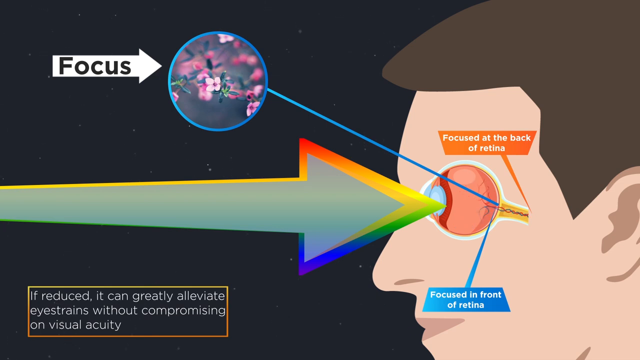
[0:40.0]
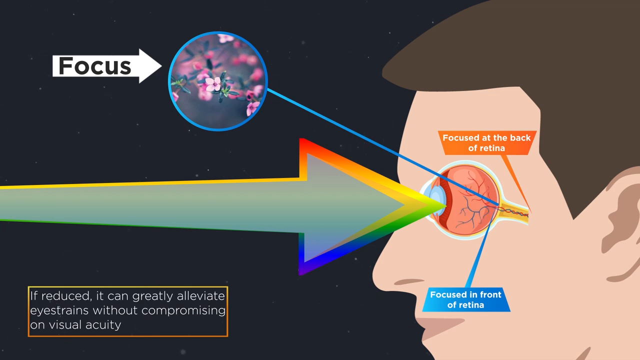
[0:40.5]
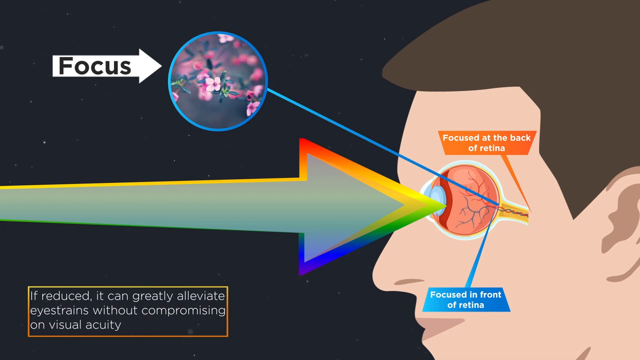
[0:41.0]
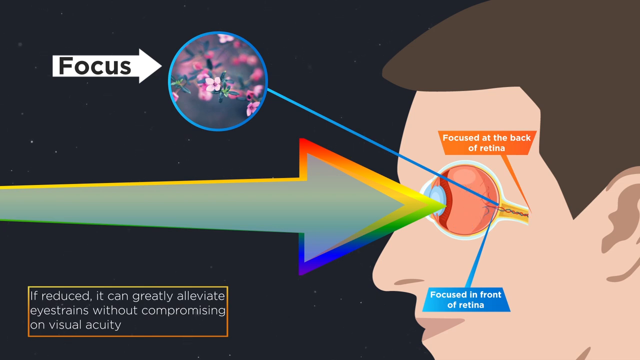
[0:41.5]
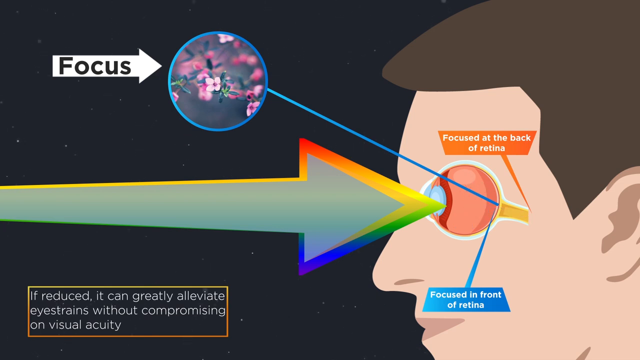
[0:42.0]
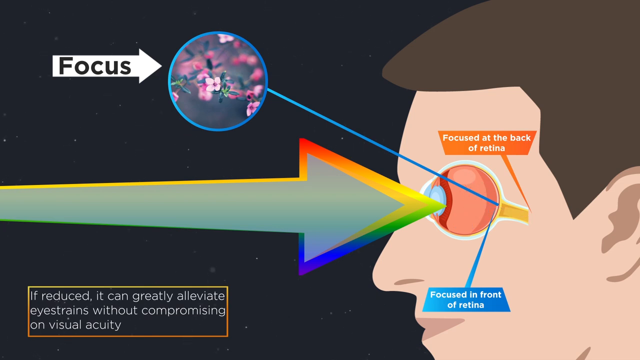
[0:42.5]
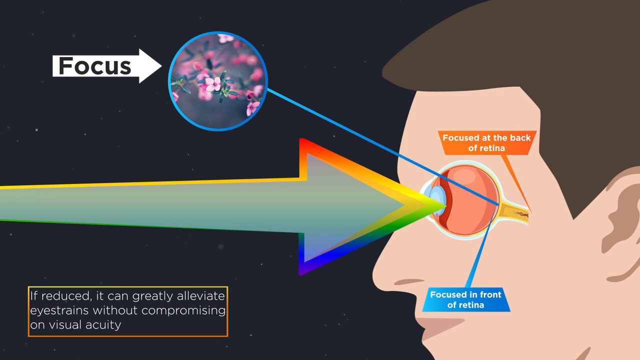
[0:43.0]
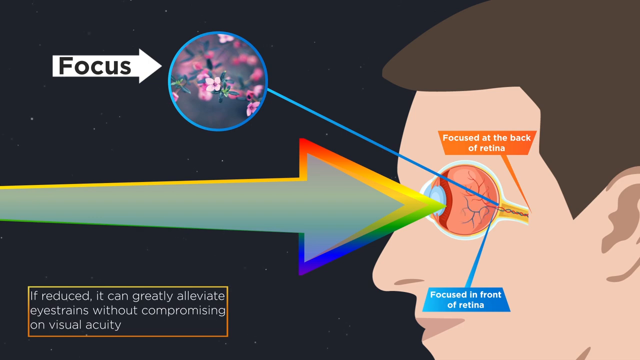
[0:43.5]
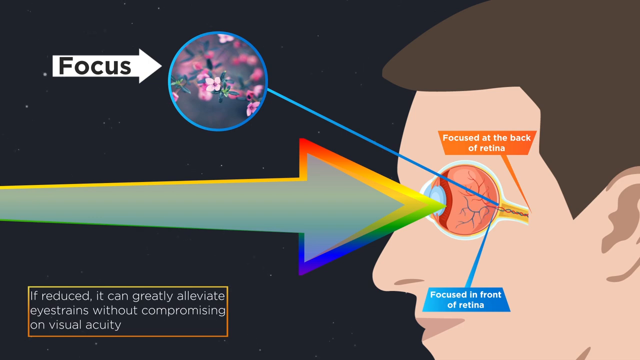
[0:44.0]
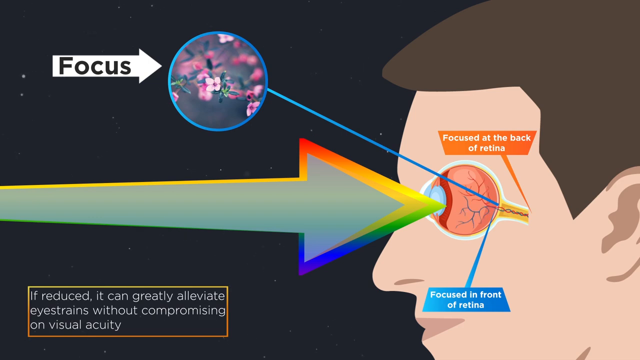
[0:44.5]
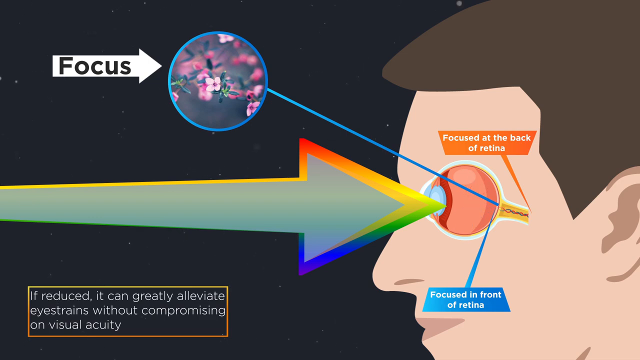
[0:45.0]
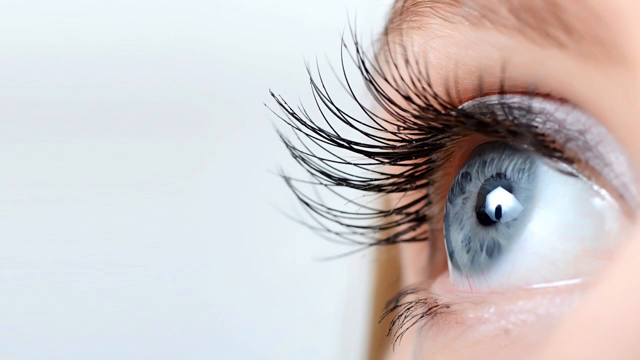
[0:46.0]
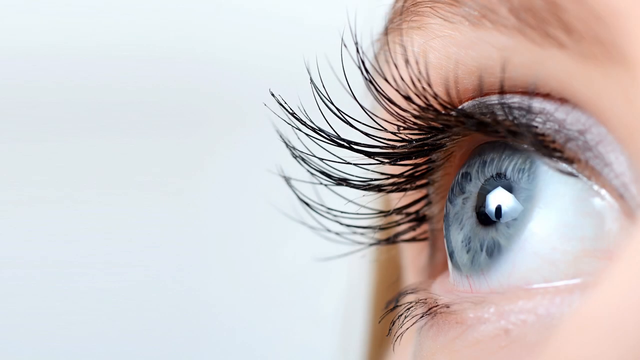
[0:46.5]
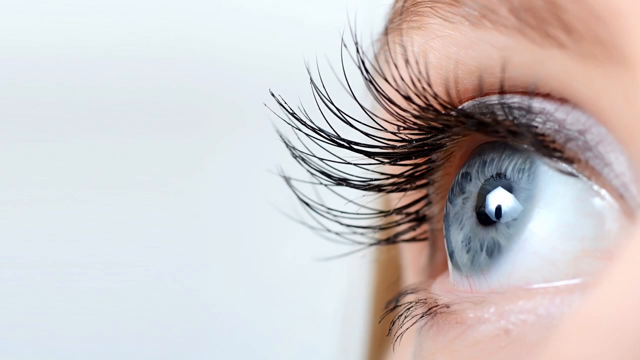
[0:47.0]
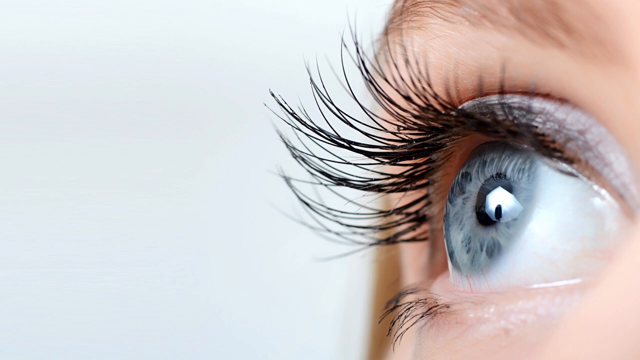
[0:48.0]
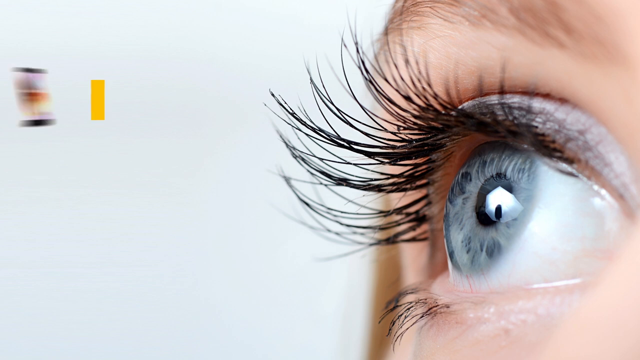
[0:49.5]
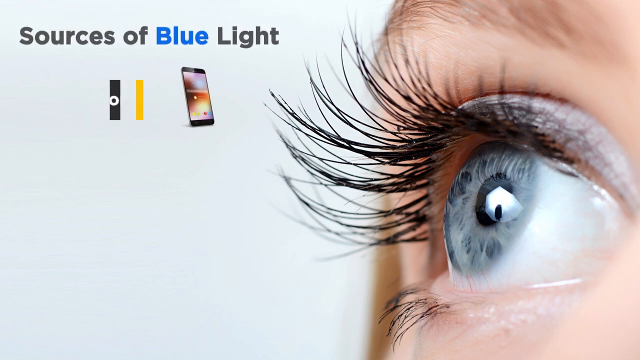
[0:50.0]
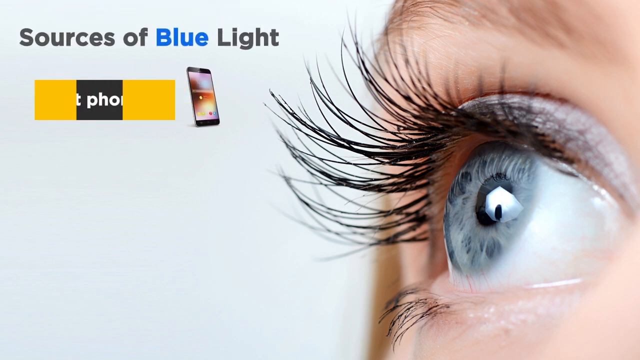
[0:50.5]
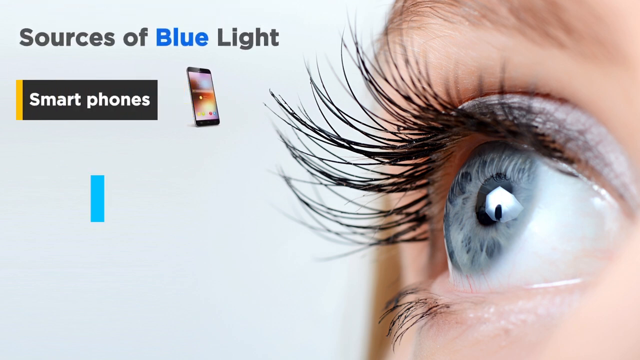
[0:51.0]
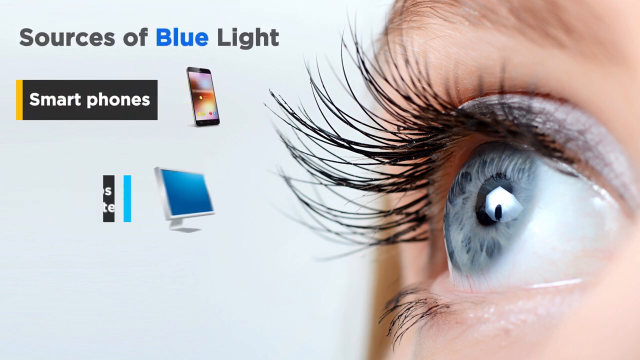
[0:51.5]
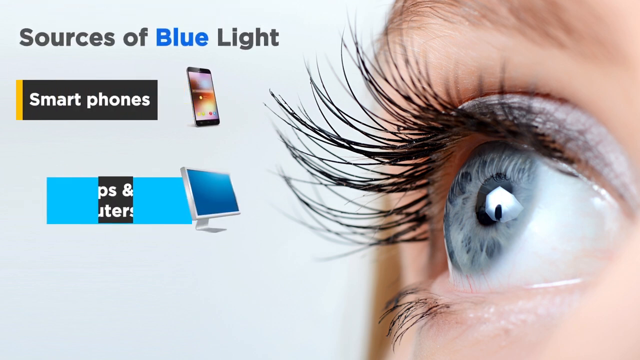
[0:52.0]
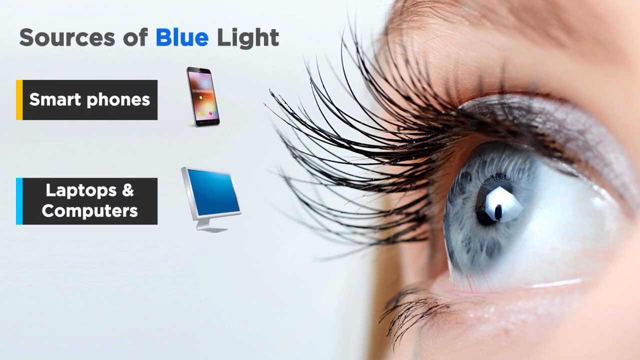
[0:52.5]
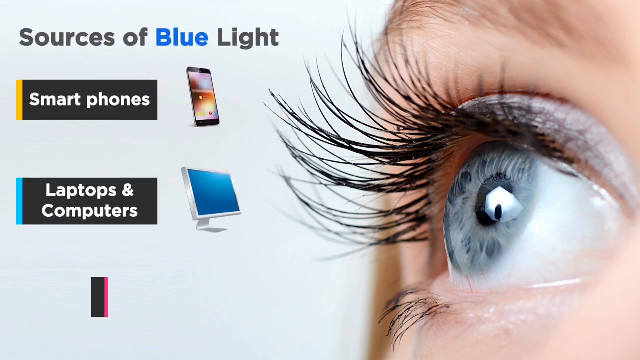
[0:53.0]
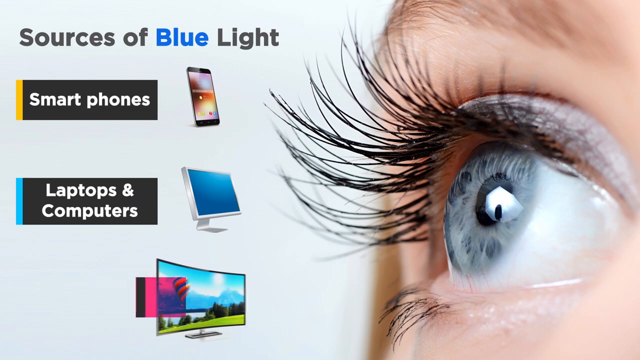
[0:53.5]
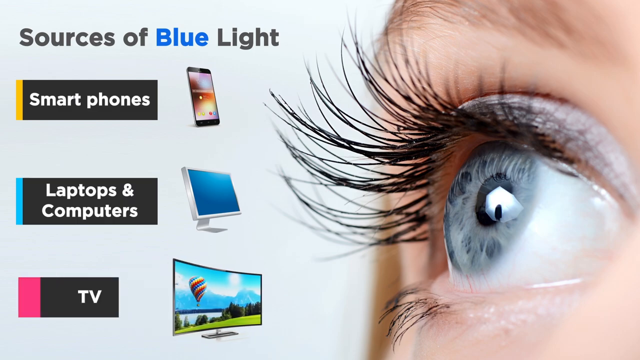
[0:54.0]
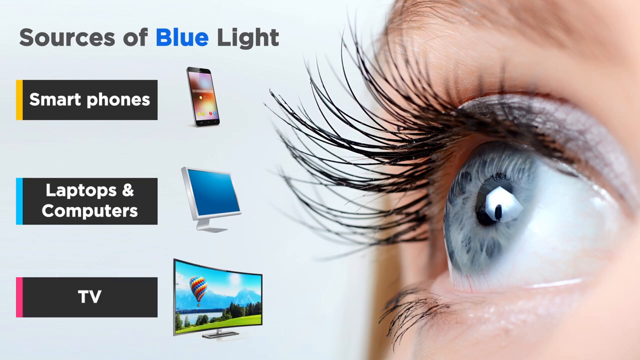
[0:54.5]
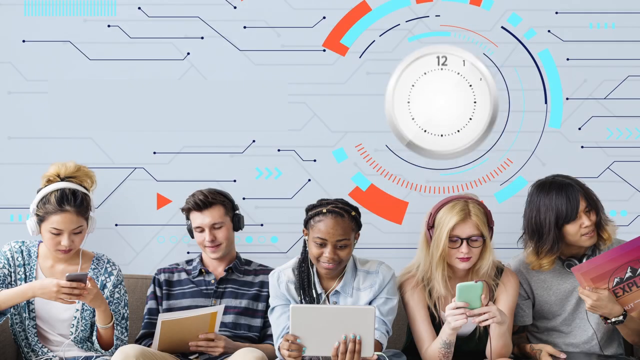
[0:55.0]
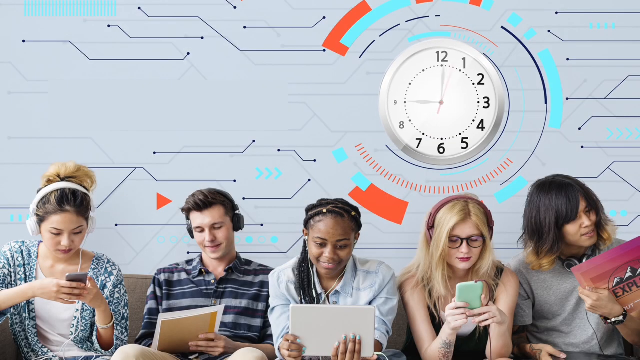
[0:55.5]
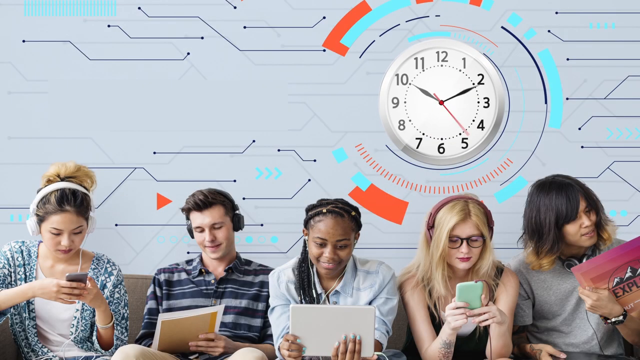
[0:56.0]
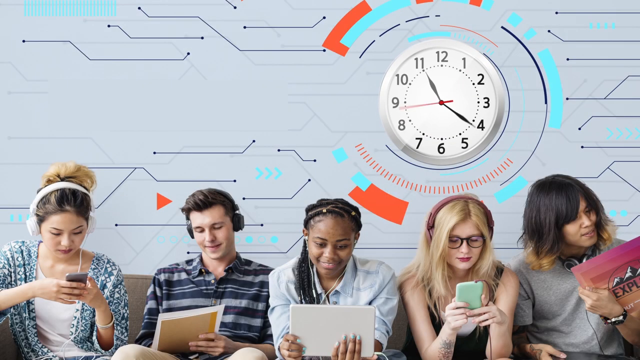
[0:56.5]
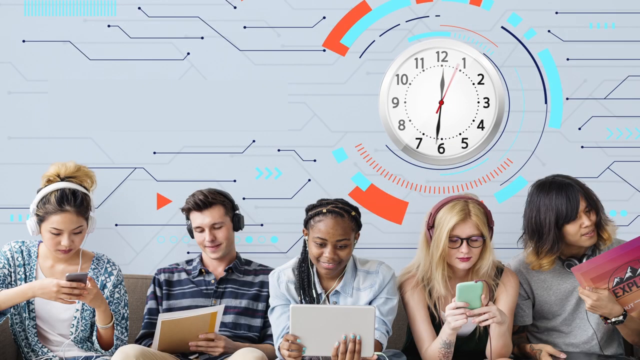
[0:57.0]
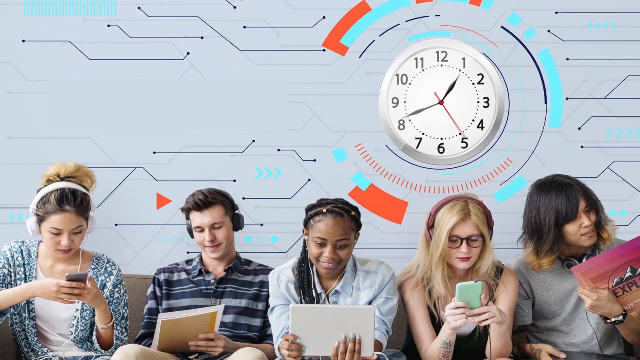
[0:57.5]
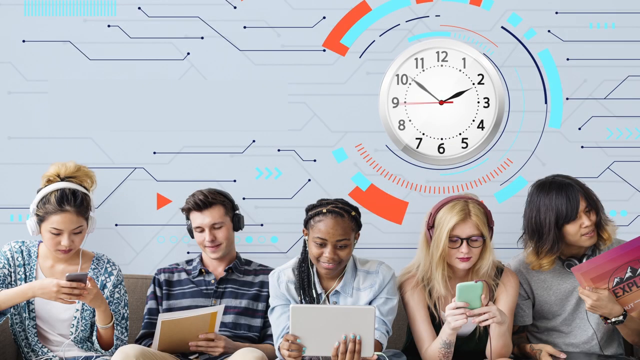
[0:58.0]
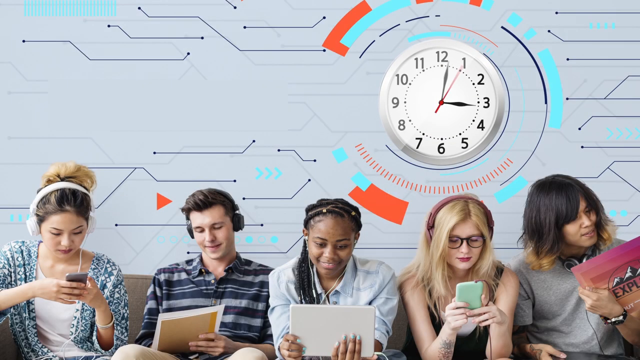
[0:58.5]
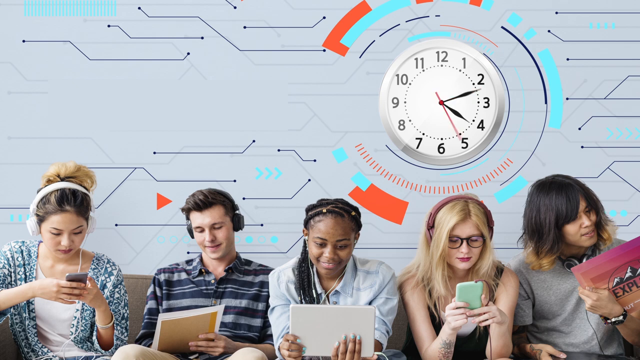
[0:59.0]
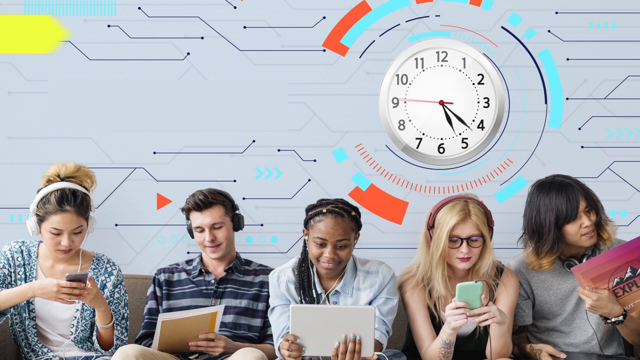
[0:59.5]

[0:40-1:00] A graphical animation shows the functionality of a human eyeball, illustrated in a side view of a man's head. The man has brown hair. The eyeball has a blue lens showing his eye color, and the retina is attached to the eyeball, with a label reading "focused at the back of the retina". A circle with pink flowers in it appears, with a blue line running from the circle to the back of the eyeball, showing the point of focus. Arrows in various colors, layered on top of each other, are projected towards the eyeball. The background of the illustration is black. The nerves and blood capillaries in the eye are highlighted. The screen then changes to a close view of a woman's eye: she has gray eyes and very long lashes that look coated in mascara, she is staring upwards, and light is reflected in her pupil. An animation slides in from the upper left corner with the text "sources of blue light". A smartphone pops up with the label "smartphone"; next come laptops and computers, with the image of a computer screen; and third, below that, TV, with the image of a large curved TV screen. Five people then appear side by side; they look young, and include one man, a blonde woman, a dark-haired woman, a black girl with braids, and an Asian girl with her hair pulled up on top of her head. Behind them is a digital effect of a gray background with a round clock whose hands are spinning rather fast.